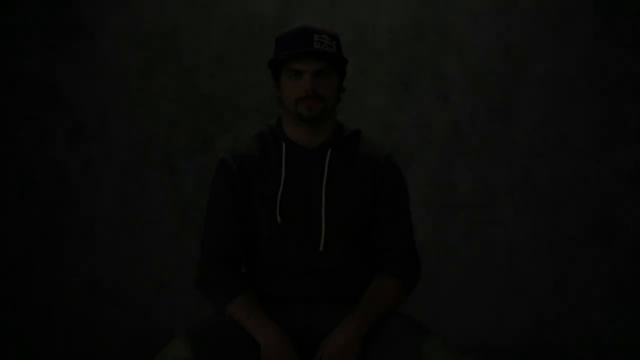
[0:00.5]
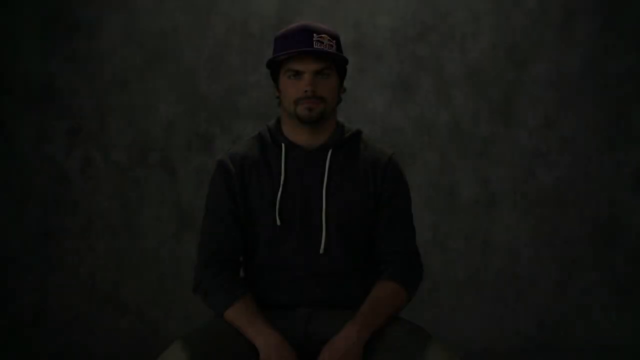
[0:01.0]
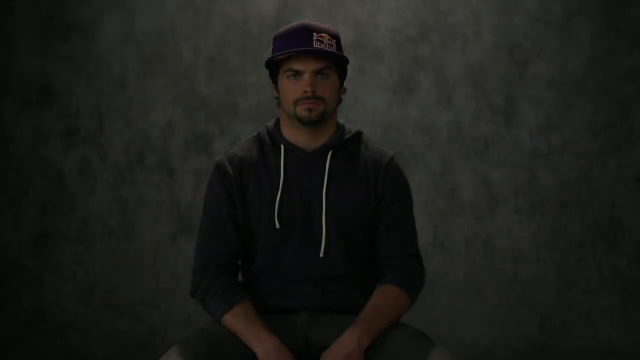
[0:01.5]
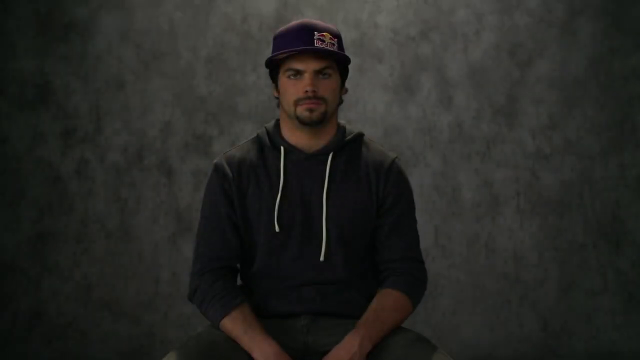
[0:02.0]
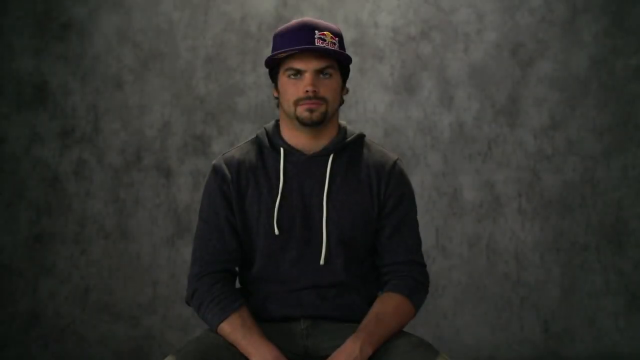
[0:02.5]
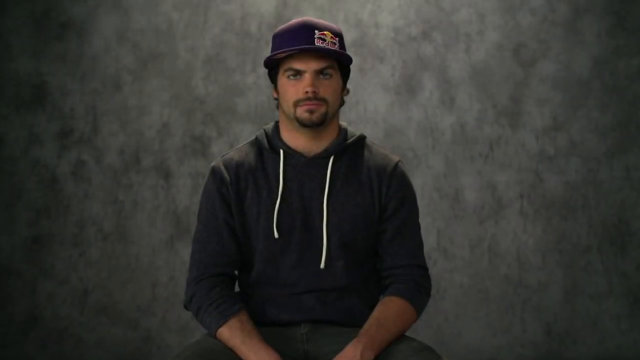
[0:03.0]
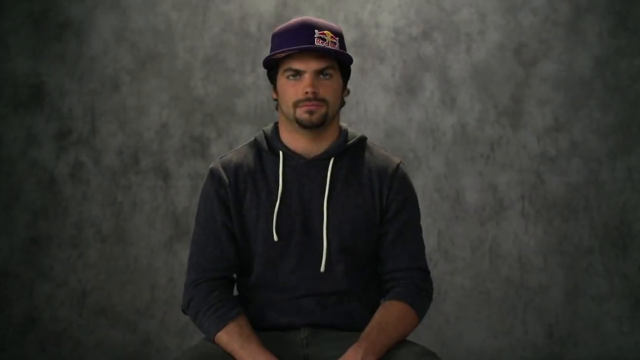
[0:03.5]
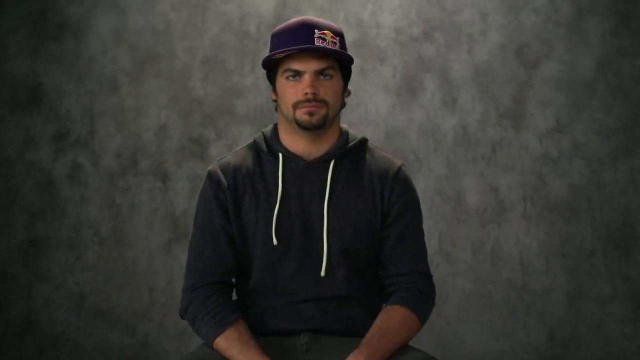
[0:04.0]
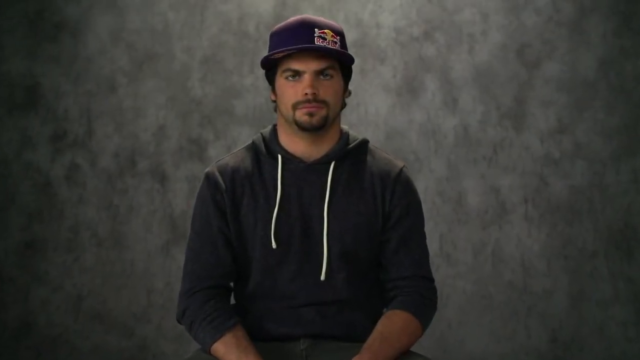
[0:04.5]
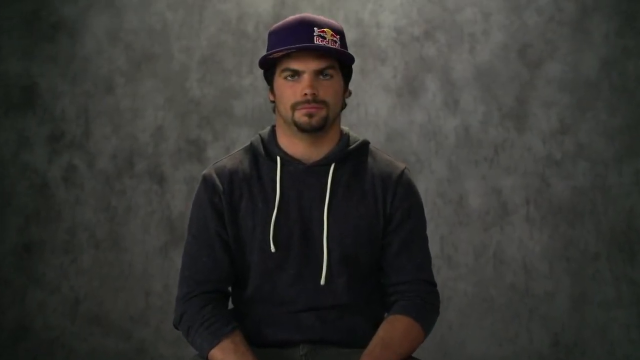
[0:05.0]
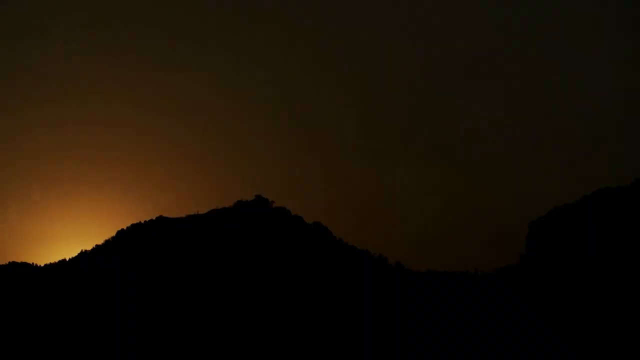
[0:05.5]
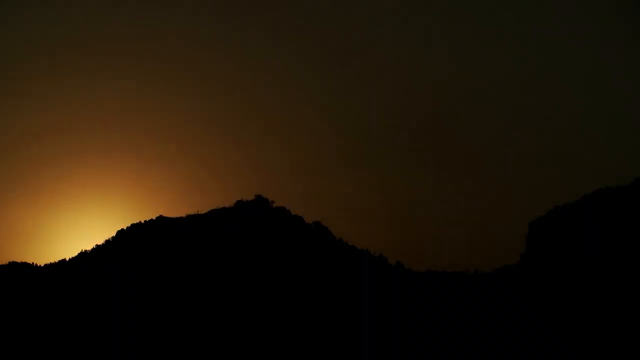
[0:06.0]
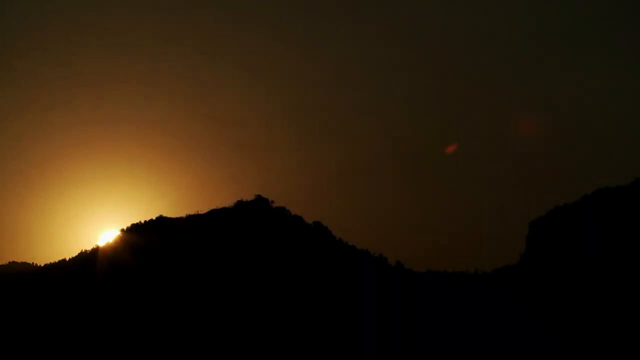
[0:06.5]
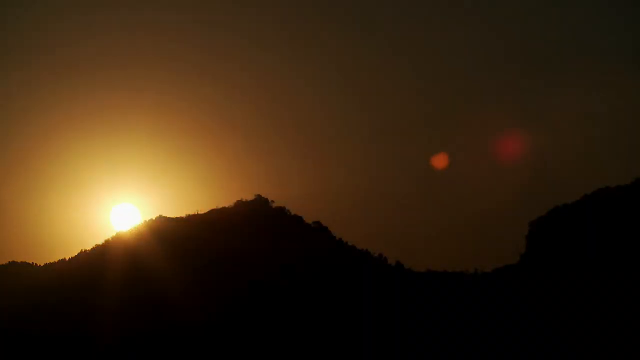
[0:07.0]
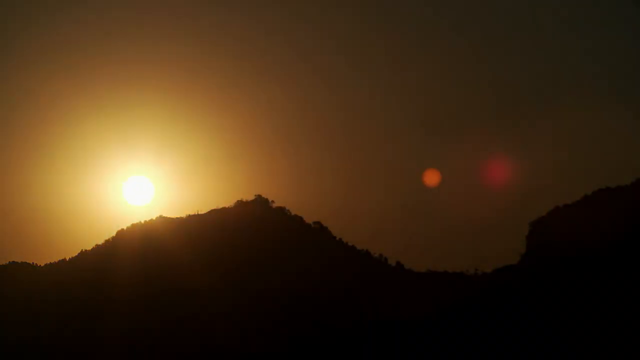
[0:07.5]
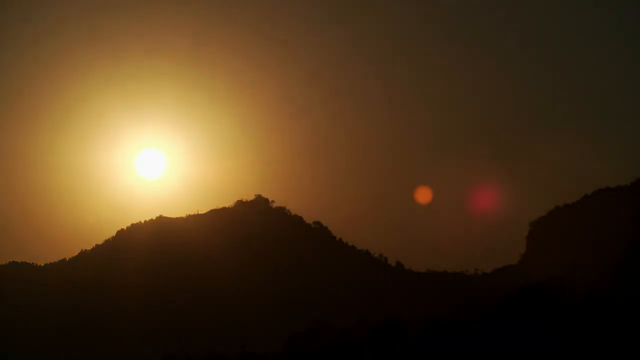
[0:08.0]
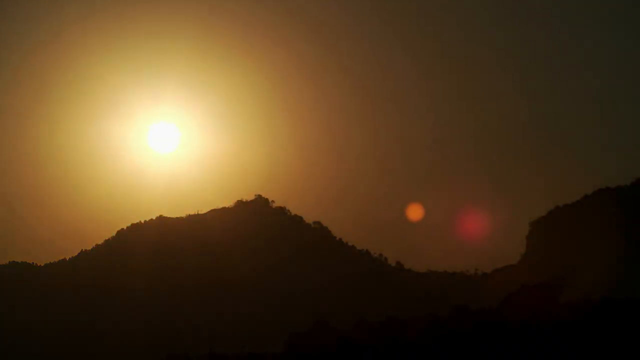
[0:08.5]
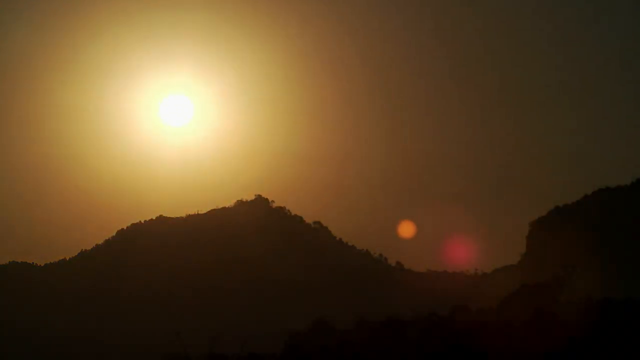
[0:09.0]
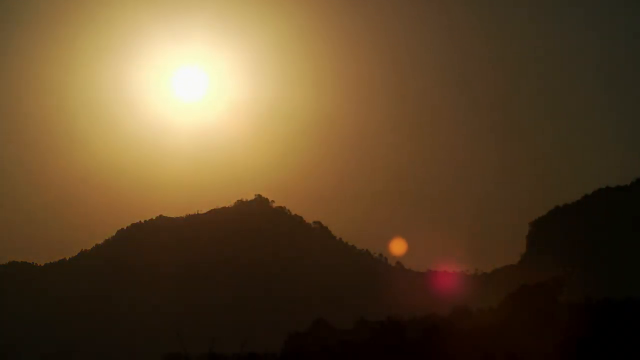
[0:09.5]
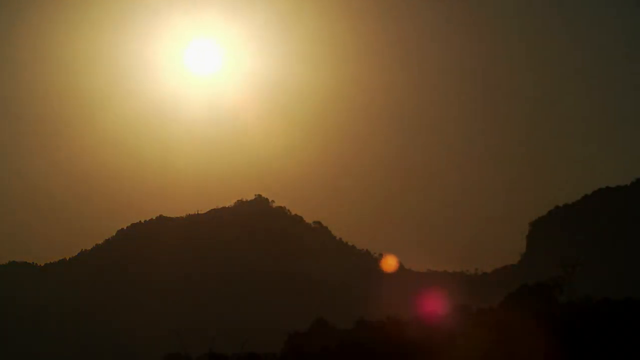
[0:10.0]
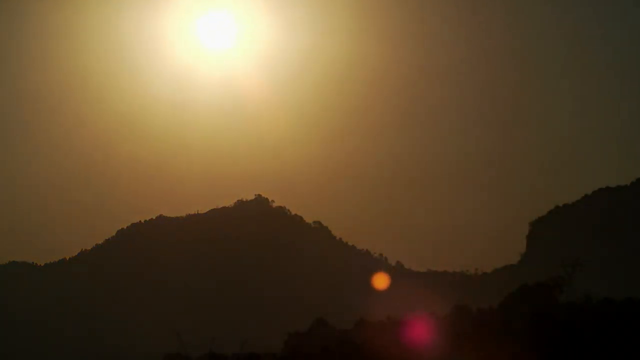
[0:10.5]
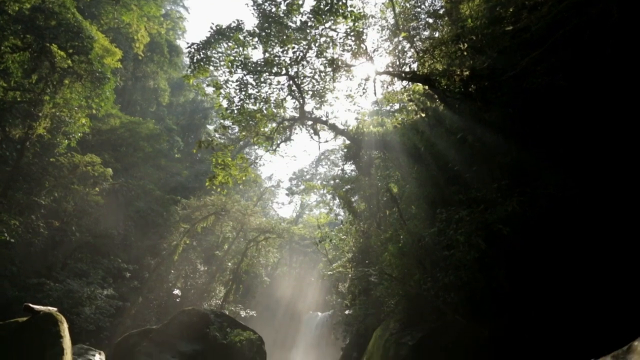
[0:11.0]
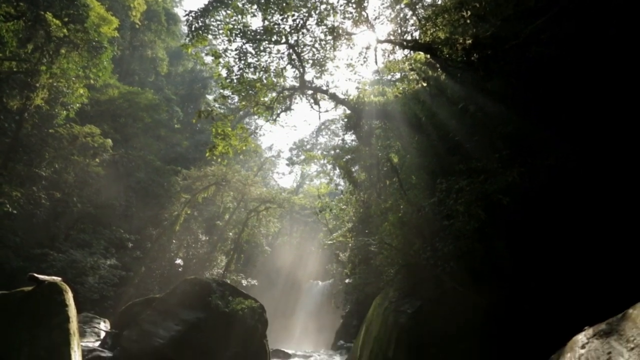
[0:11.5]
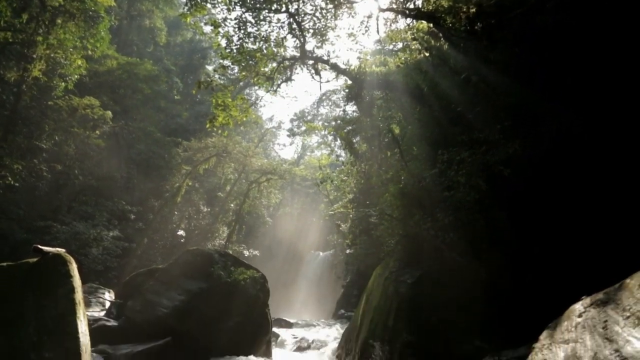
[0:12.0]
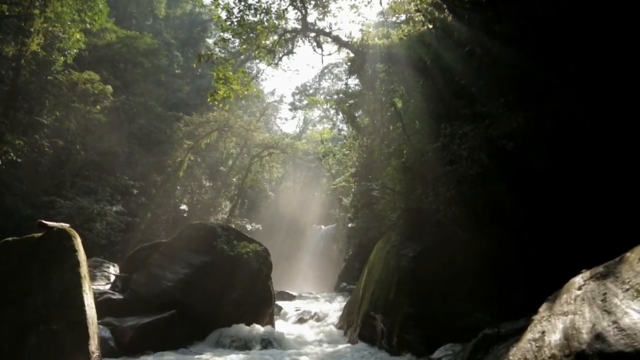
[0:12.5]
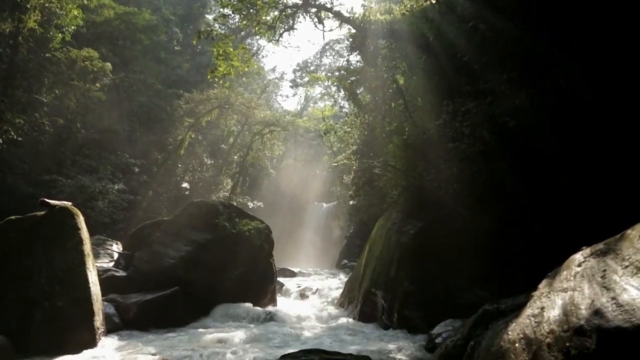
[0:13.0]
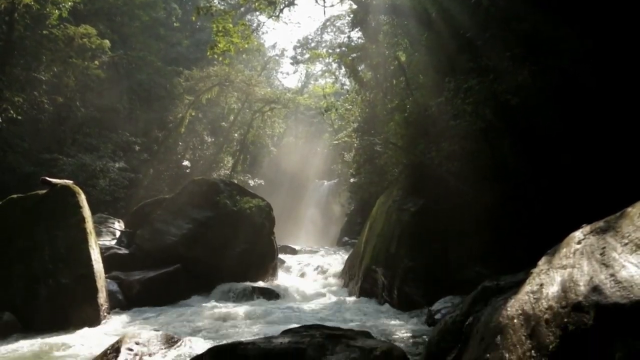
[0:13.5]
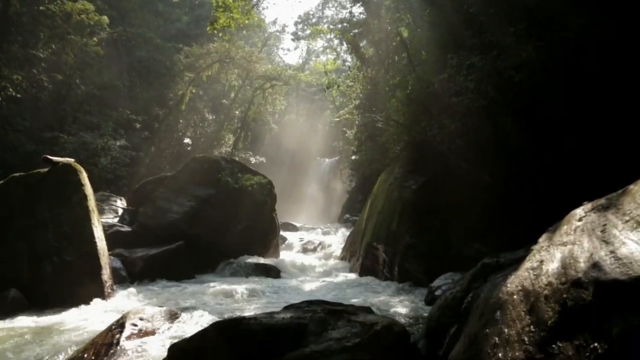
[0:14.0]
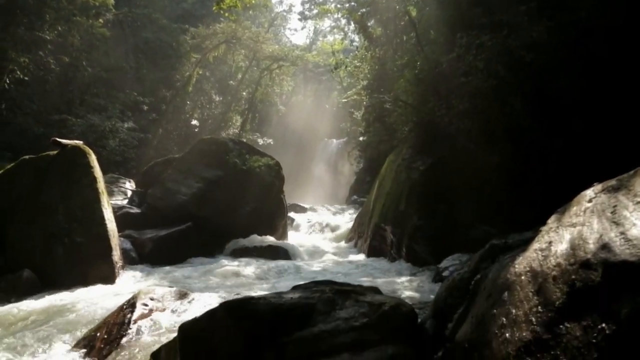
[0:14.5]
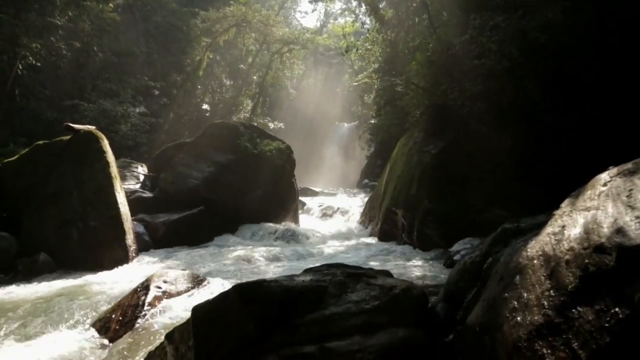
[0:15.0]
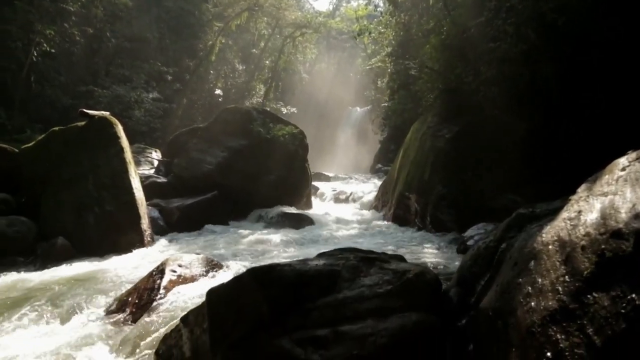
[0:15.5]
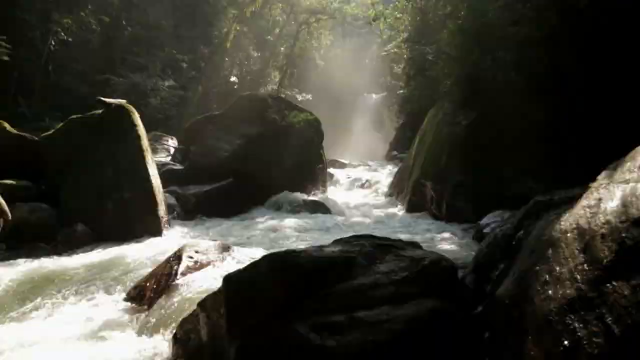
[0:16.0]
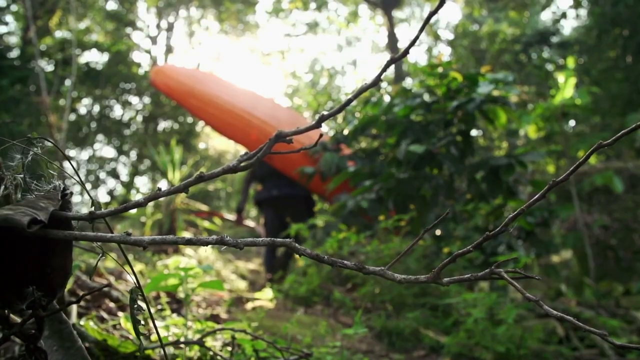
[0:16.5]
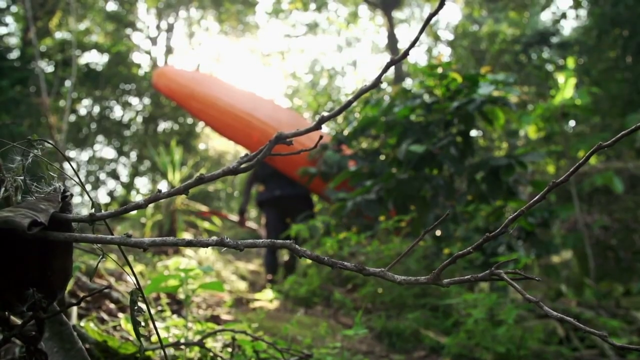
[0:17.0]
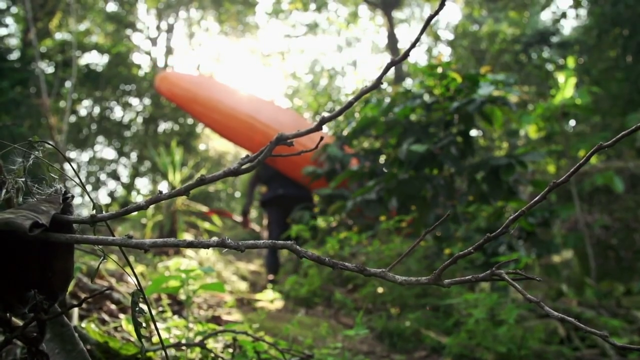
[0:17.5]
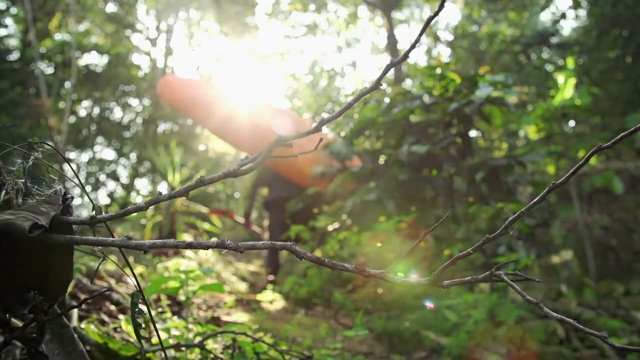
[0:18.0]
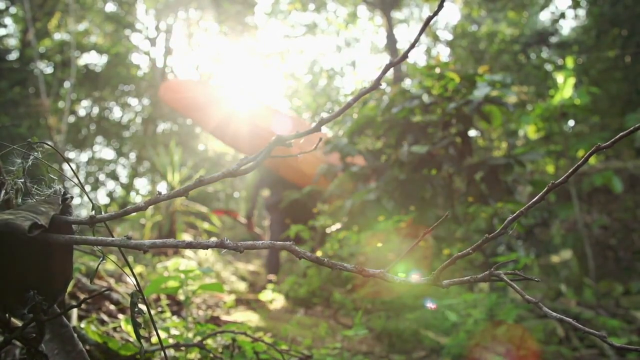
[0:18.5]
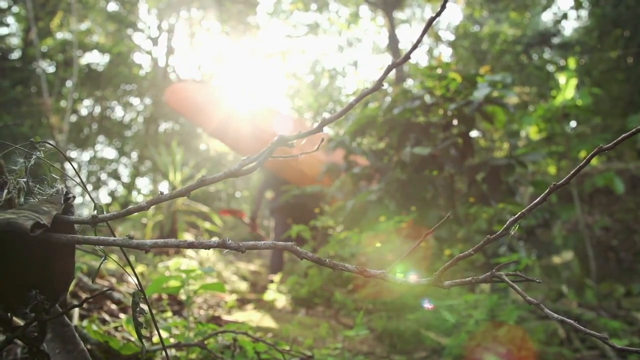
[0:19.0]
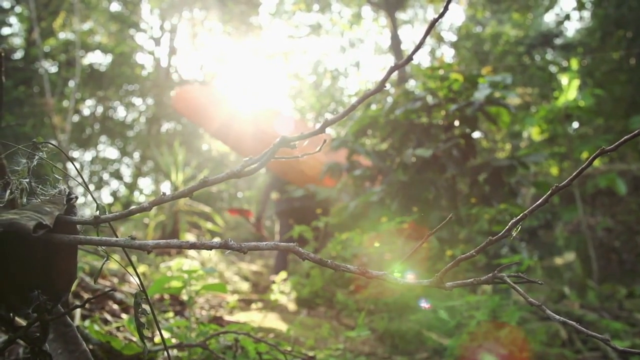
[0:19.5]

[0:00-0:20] A young man sits in a small room against a smoky gray wall, his arms in front of his lap, looking directly at the camera. He wears a dark gray hoodie with two noticeable white drawstrings and a purple hat with a Red Bull logo on it. A Red Bull logo also appears in the bottom right corner of the video. After a few moments of the camera seemingly zooming in on him, the video transitions to a sunset coming up over a hillside, and then to a scene of jungle-style trees with a river down the middle. The water is very white and foamy, and rays of sunlight pour in through the tree line, creating a cascading light that falls on the river as the view kind of passes over the water. Text at the bottom of the screen reads "To me, the word limit is more a suggestion."